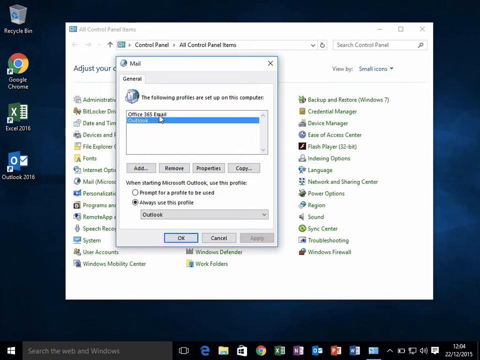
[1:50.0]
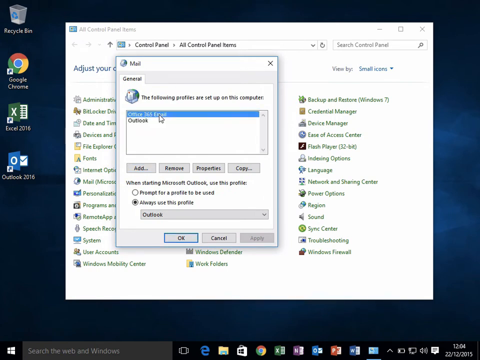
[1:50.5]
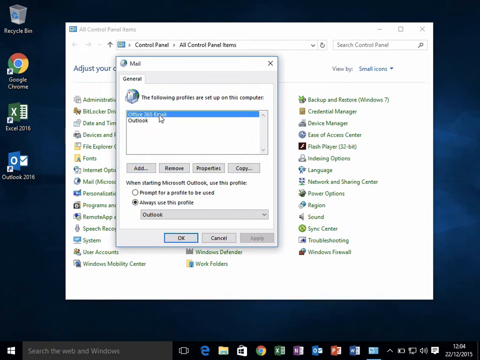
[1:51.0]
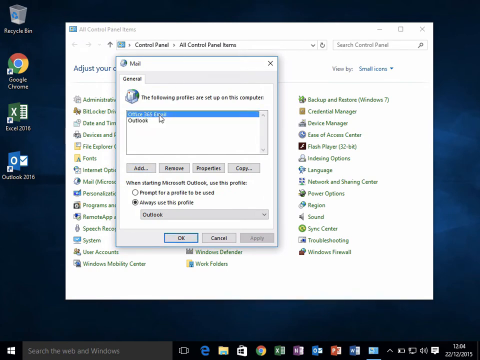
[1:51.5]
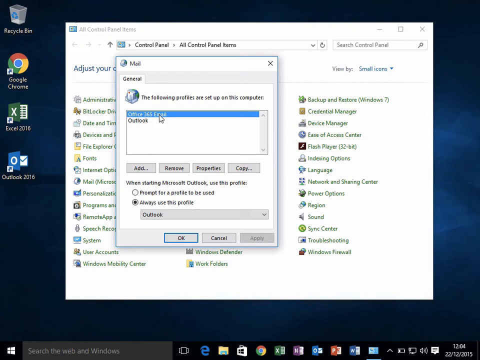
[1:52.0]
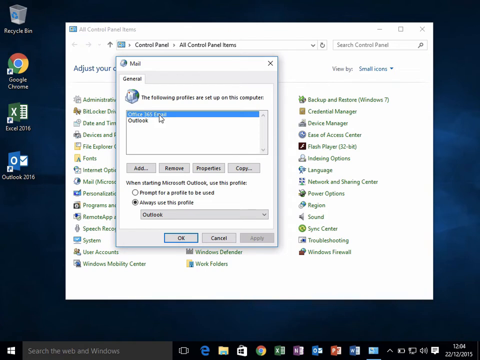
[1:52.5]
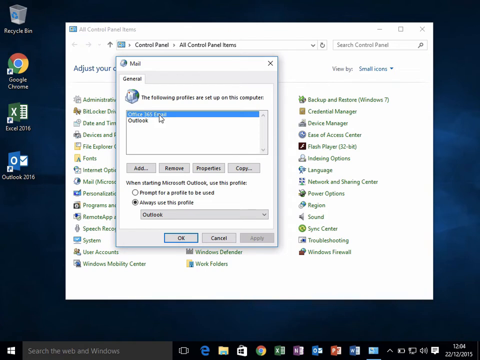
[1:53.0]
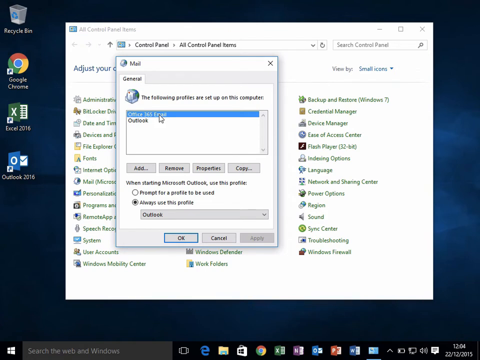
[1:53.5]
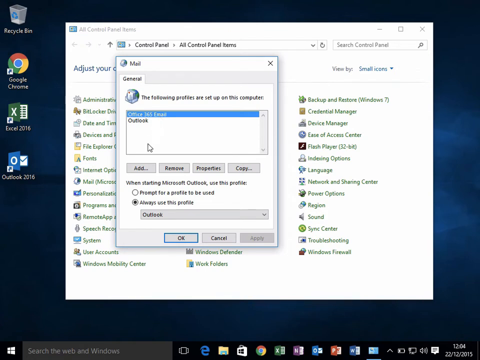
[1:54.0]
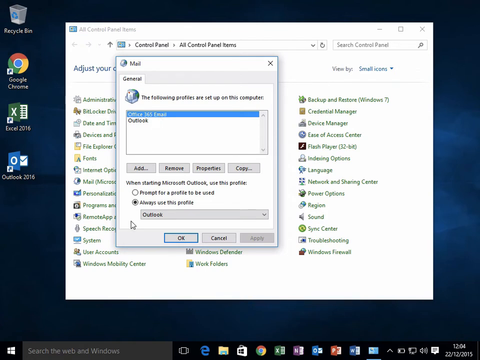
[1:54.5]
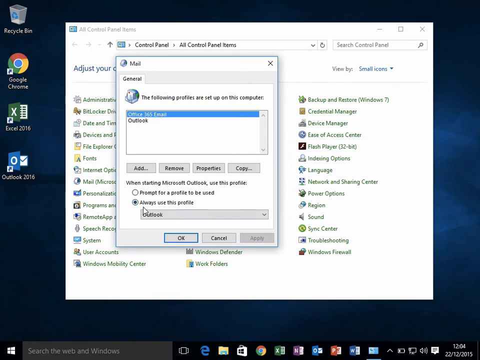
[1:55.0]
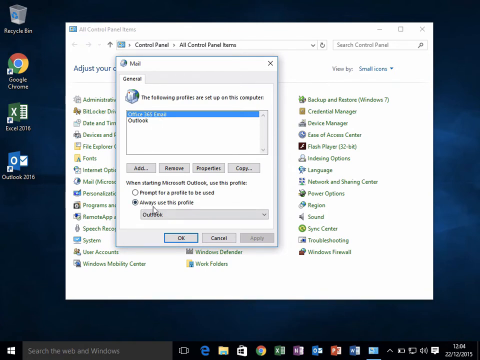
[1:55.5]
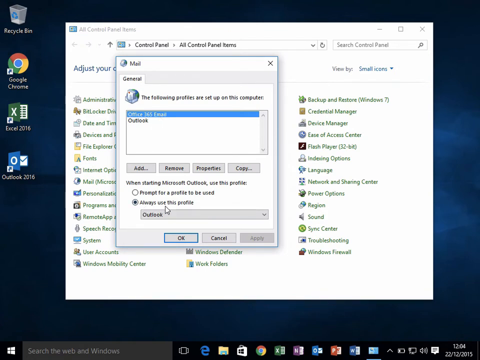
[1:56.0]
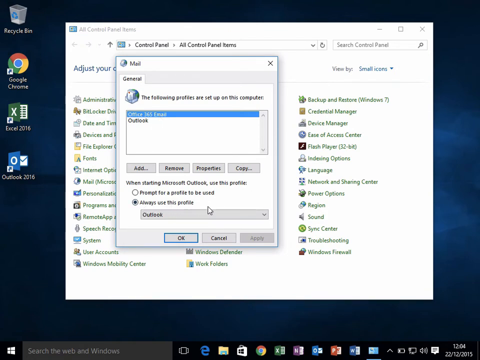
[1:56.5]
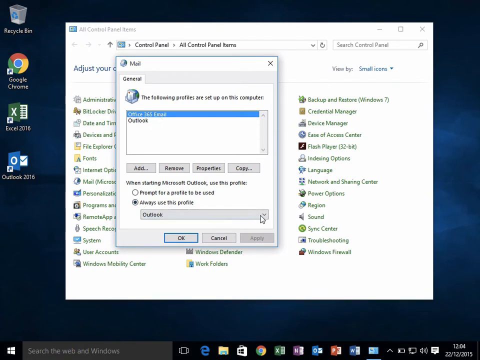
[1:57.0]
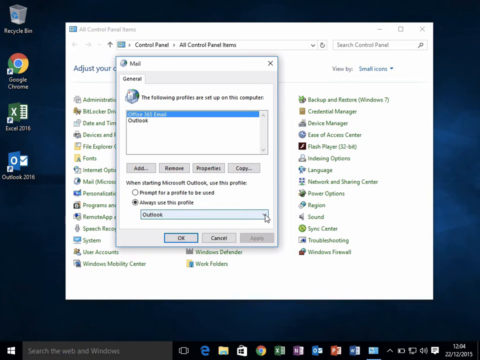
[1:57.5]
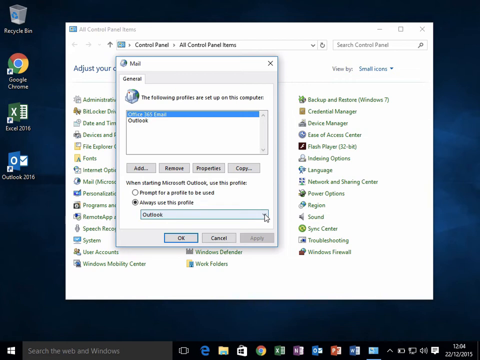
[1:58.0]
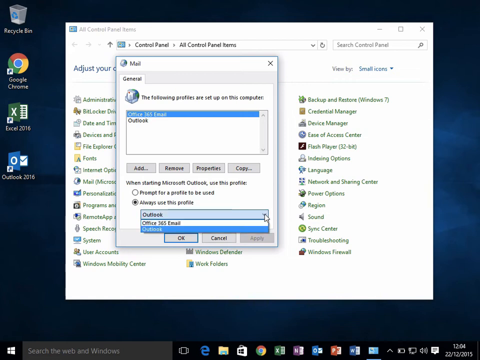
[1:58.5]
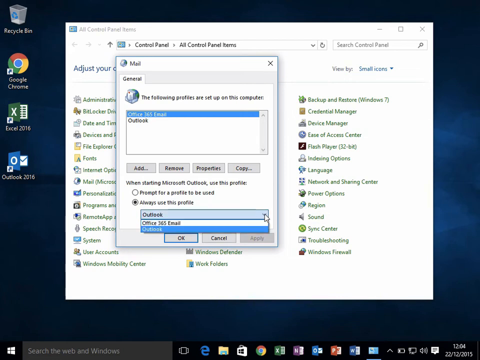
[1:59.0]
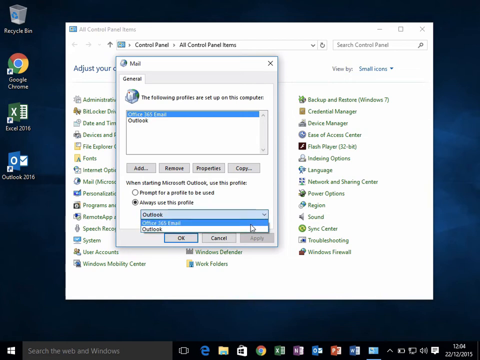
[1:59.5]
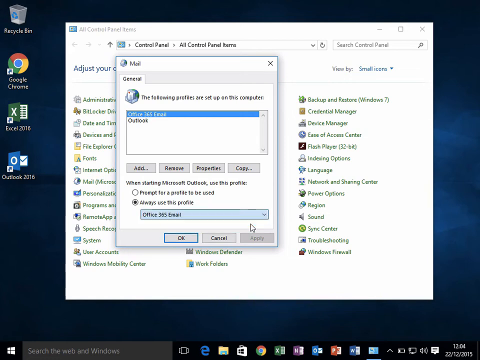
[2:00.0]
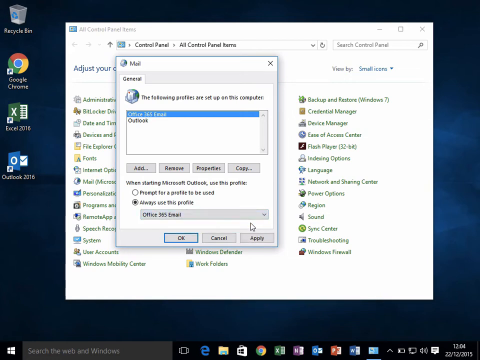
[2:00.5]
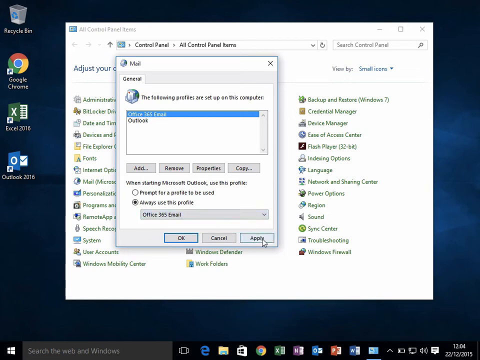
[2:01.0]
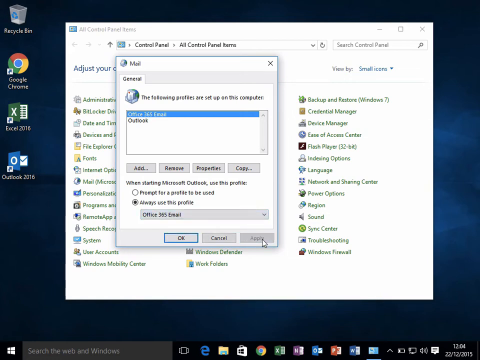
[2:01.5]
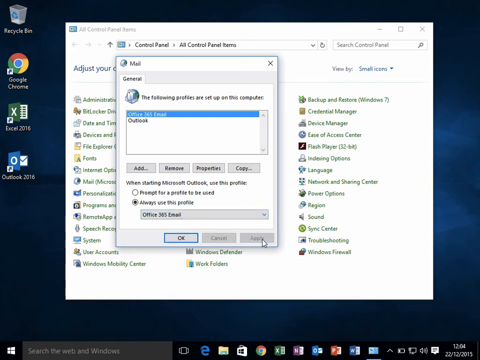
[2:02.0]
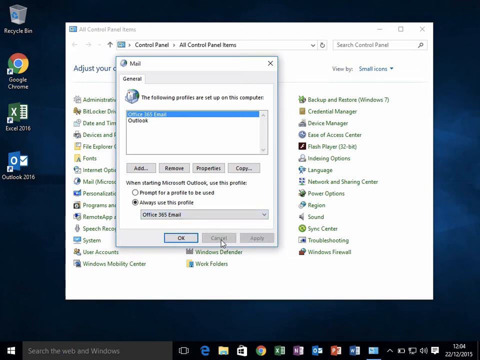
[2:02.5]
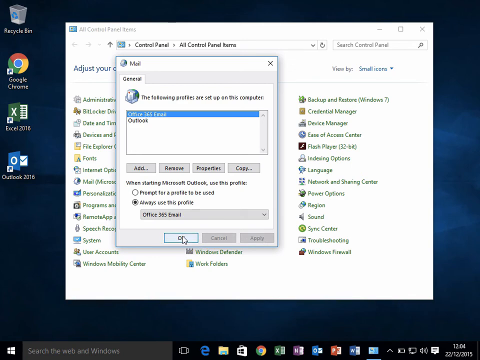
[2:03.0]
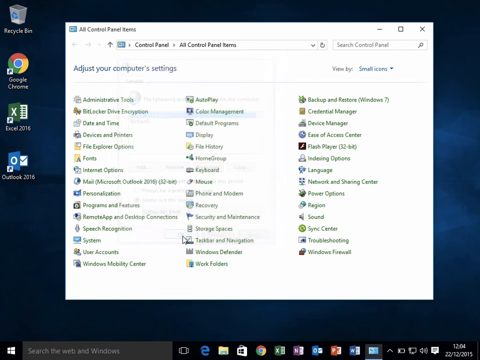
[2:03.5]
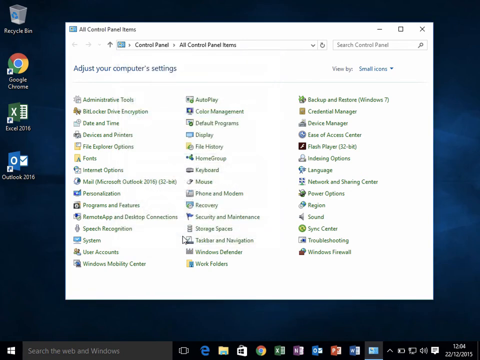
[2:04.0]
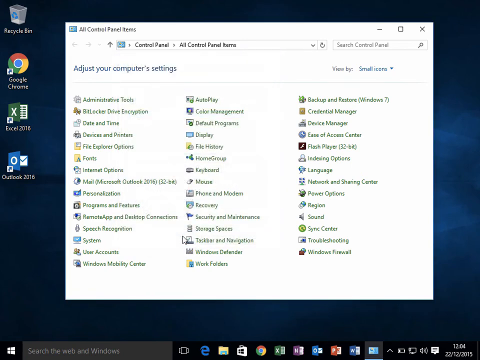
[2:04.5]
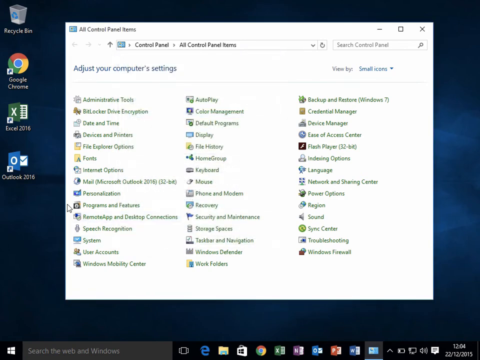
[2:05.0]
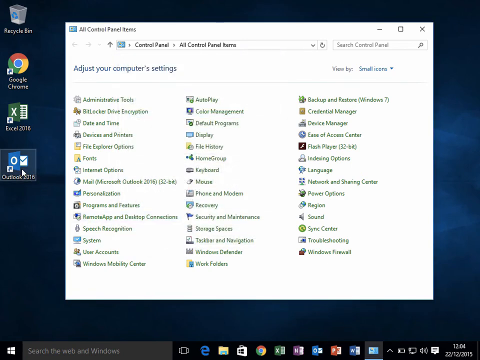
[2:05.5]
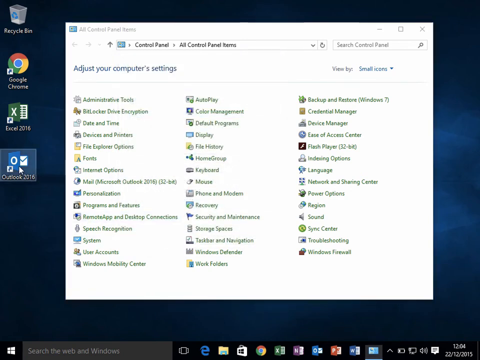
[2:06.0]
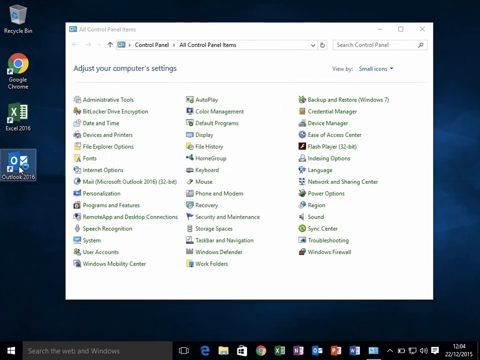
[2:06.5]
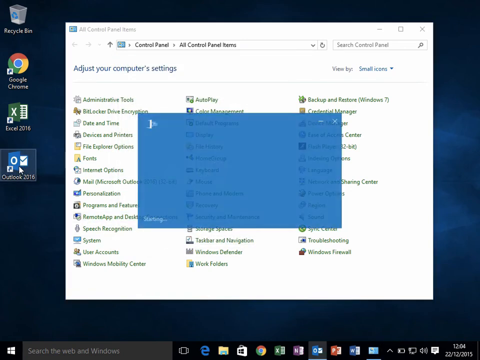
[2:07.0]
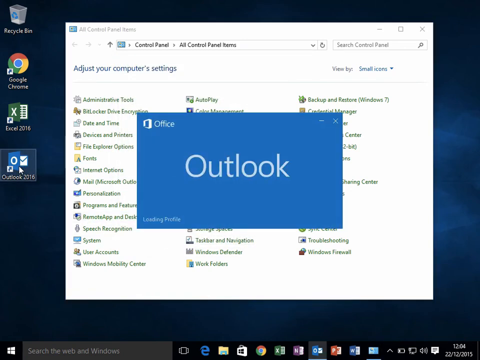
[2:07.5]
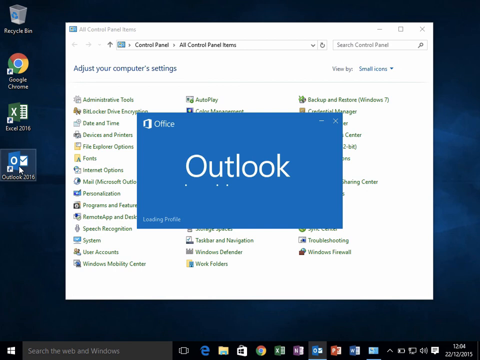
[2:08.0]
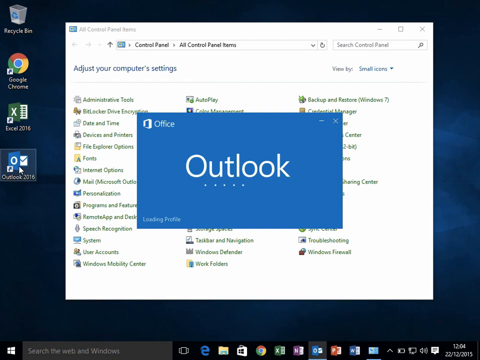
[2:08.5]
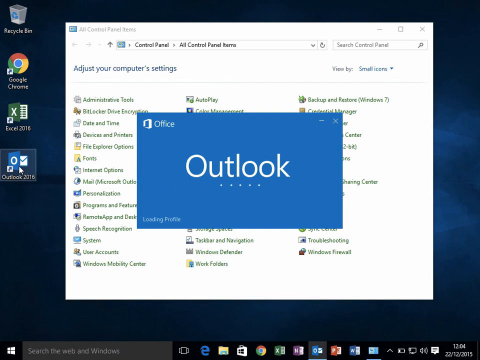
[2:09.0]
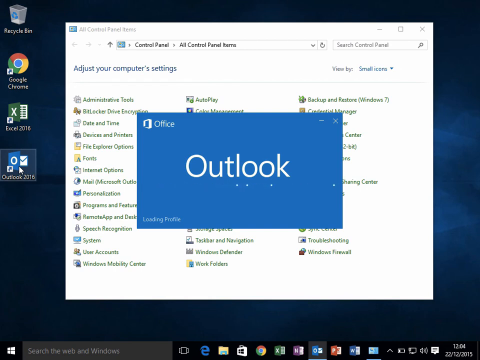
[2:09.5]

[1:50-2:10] The mouse pointer moves up and "Office 365 email" is highlighted blue. The pointer then moves down under an area that says "always use this profile" and to the right within the Mail window, where the user clicks an input box showing two options, Office 365 email and Outlook, and chooses Office 365 email. The user clicks the apply button in the bottom left corner of the small window, then moves the pointer to the left and clicks the OK button. The window closes, leaving only the control panel window open. The user moves the pointer to the Outlook 2016 icon on the left side of the desktop and double-clicks it, and Outlook loads in the middle of the screen: a blue rectangular box with "Office" in its top left corner and "Outlook" in its middle.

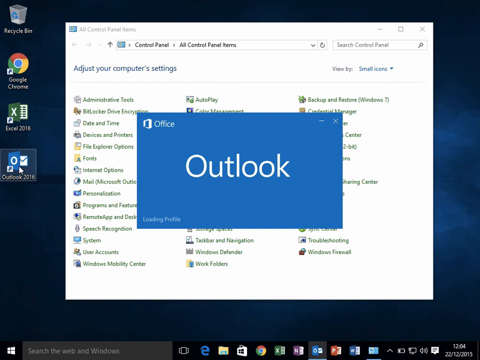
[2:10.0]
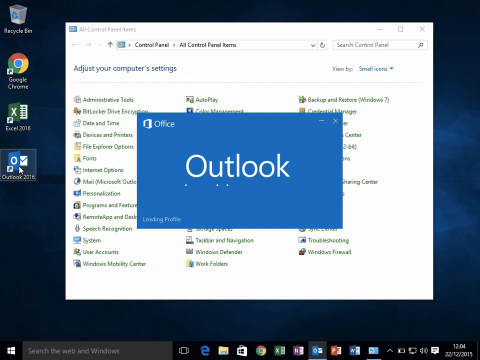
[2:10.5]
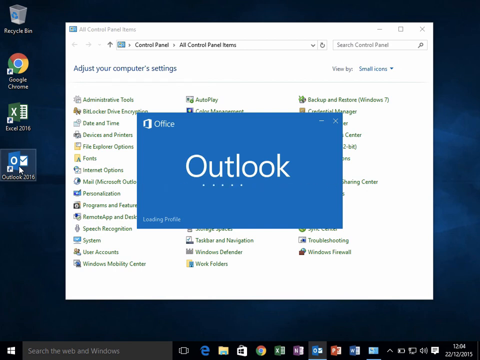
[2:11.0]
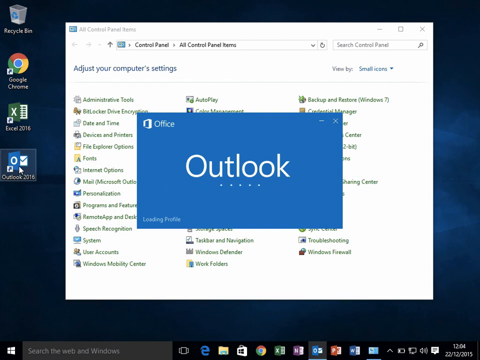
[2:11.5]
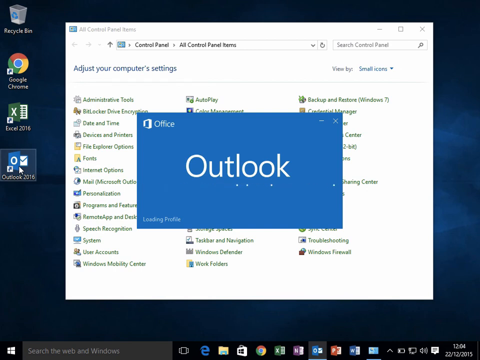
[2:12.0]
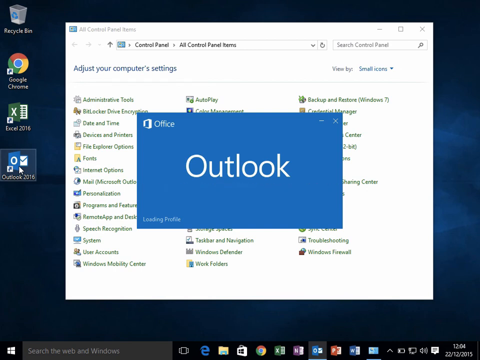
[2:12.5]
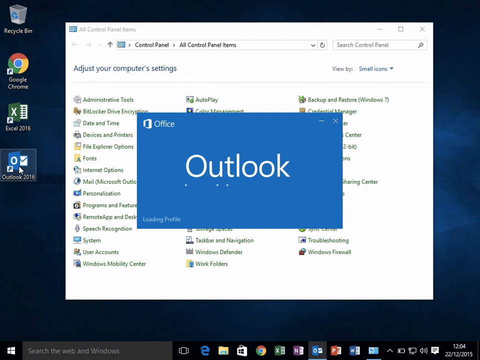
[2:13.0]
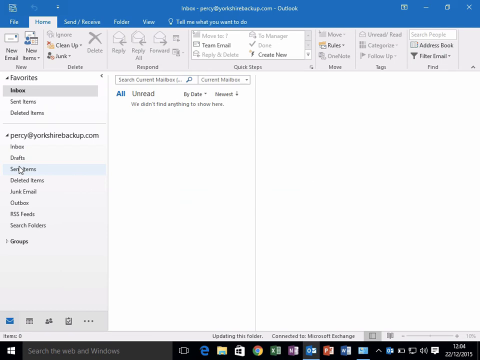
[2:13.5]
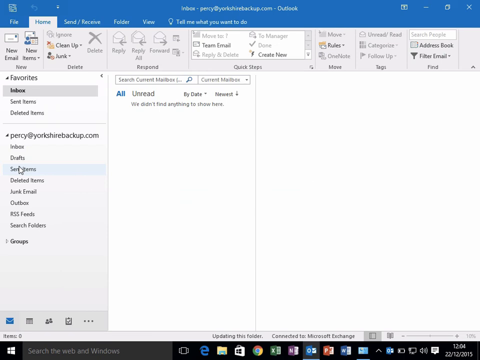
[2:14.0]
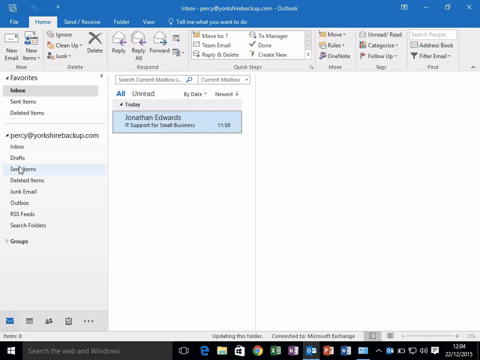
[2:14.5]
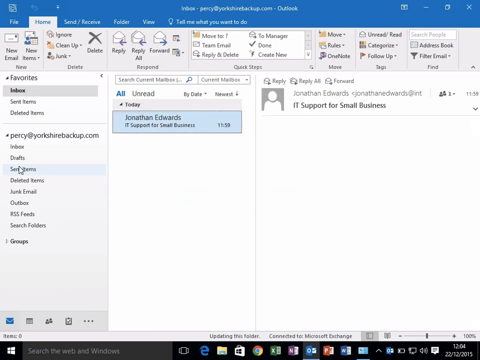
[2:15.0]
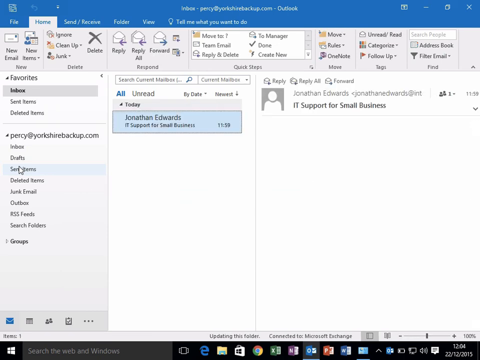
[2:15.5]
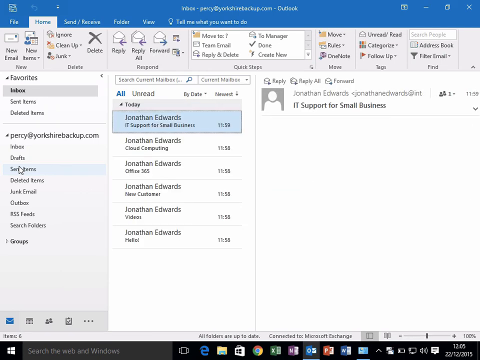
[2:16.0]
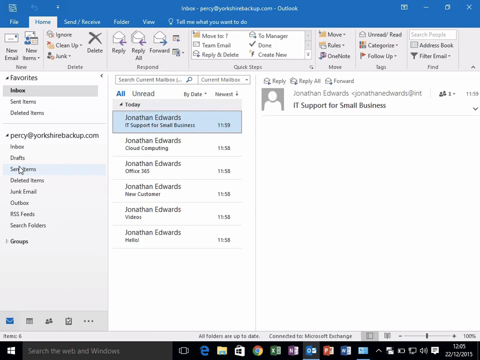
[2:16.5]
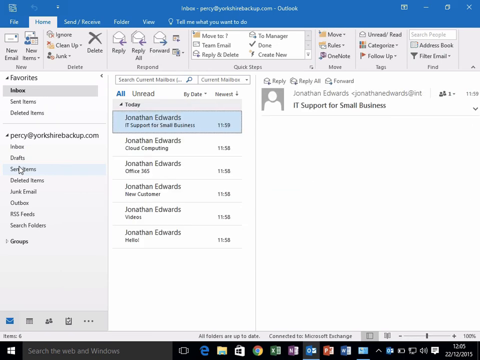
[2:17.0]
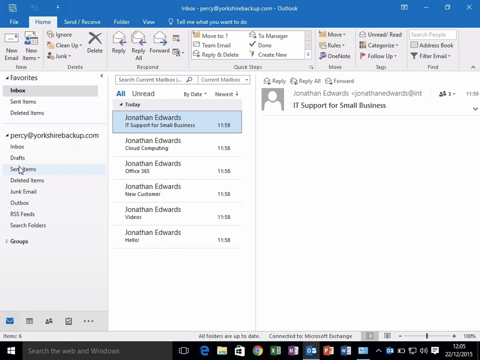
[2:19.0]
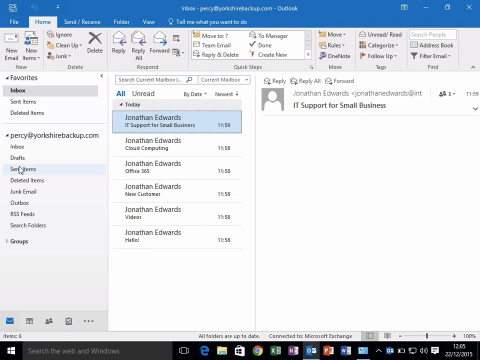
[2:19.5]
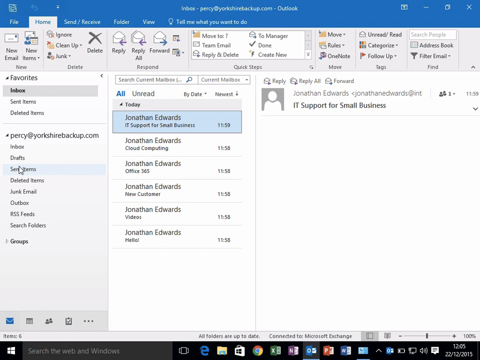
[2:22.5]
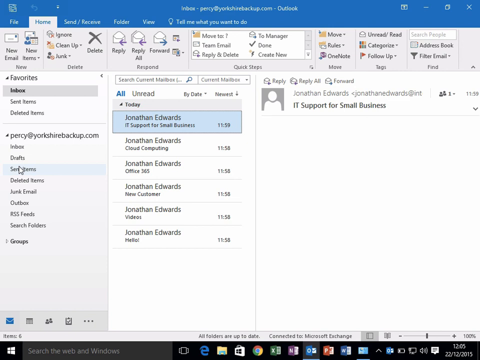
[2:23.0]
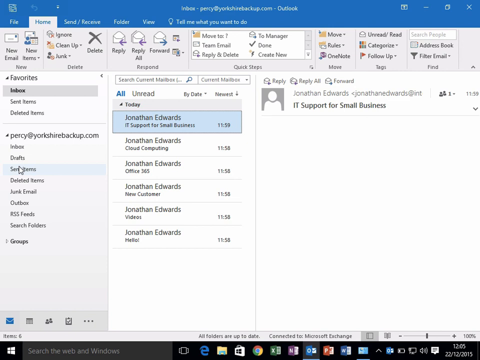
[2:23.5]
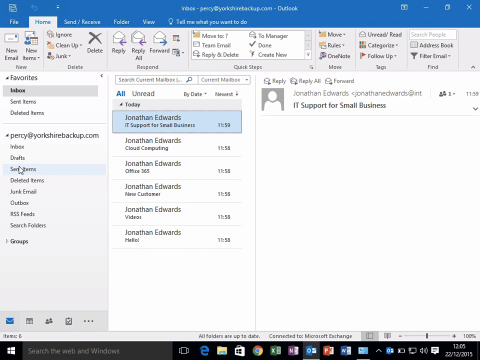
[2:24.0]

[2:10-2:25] Outlook loads in the middle of the screen, shown as a blue rectangular box with "Outlook" in white font in its middle. The program then opens completely. The user's inbox is in the middle, with a total of six emails. On the left side are favorites, Inbox, Sent items and deleted items. On the right side is a preview area for the emails, and the upper section holds the various options, configurations and settings for sending and receiving emails.